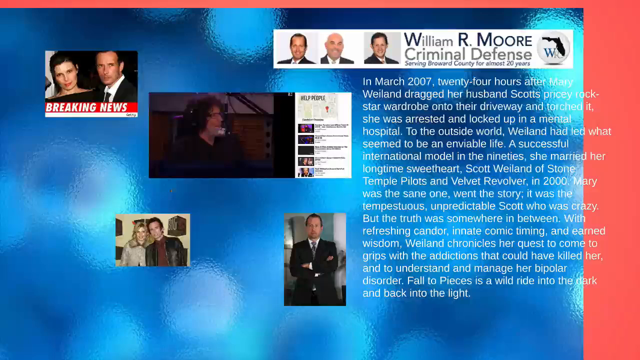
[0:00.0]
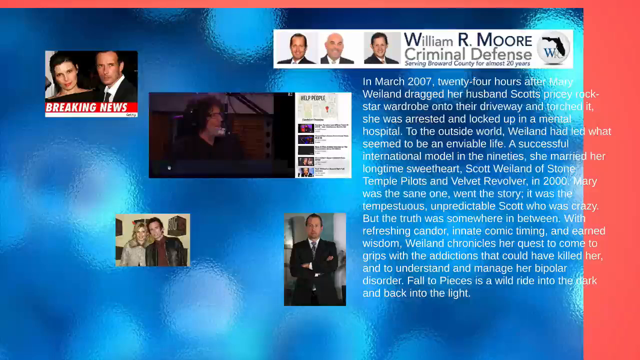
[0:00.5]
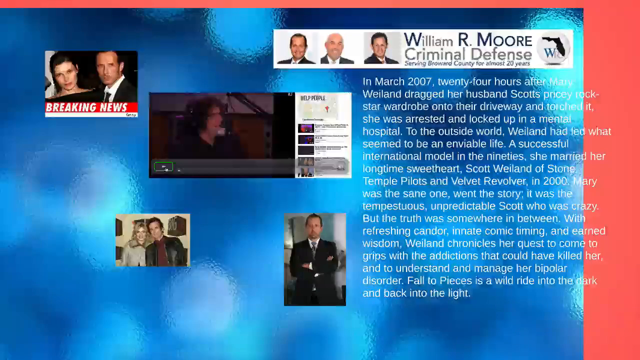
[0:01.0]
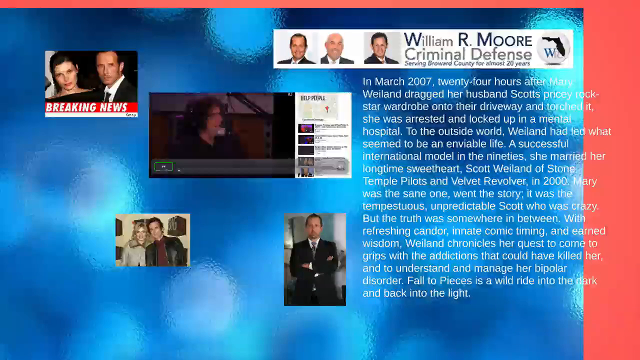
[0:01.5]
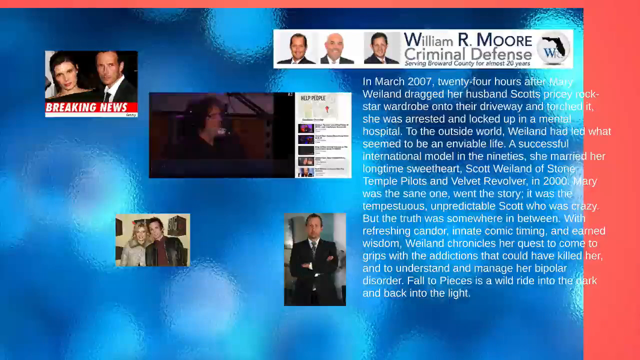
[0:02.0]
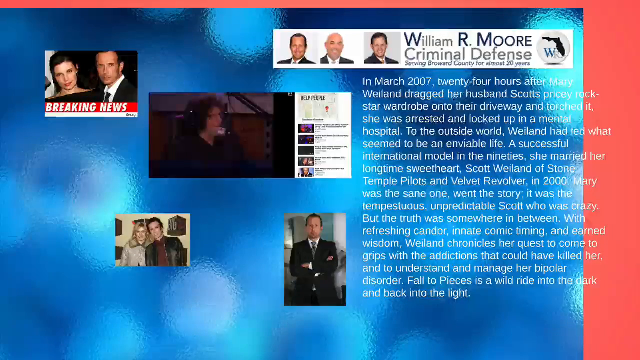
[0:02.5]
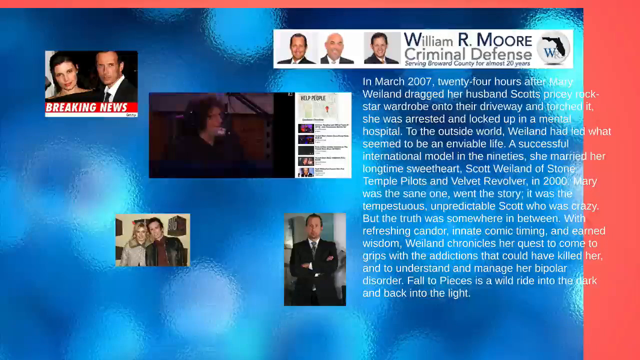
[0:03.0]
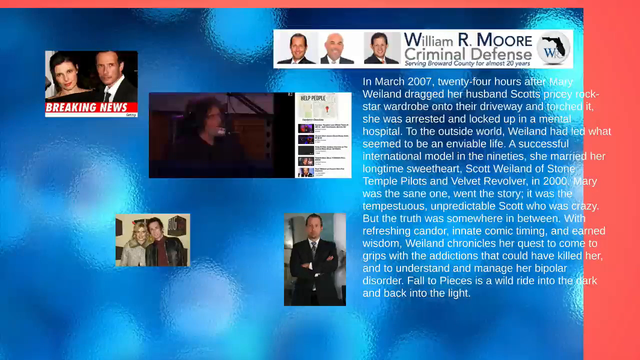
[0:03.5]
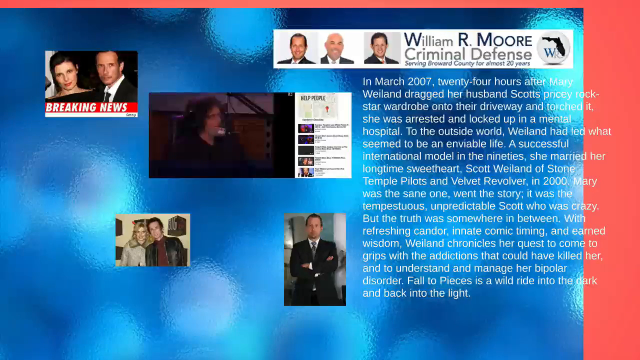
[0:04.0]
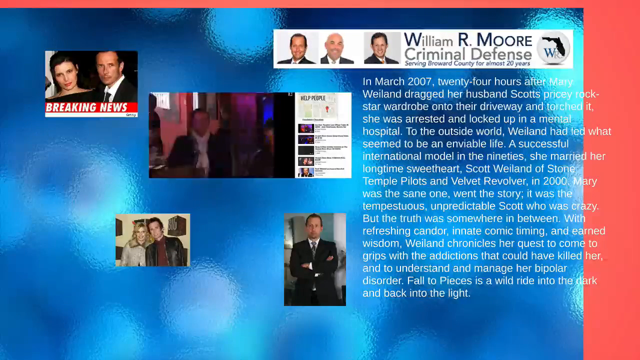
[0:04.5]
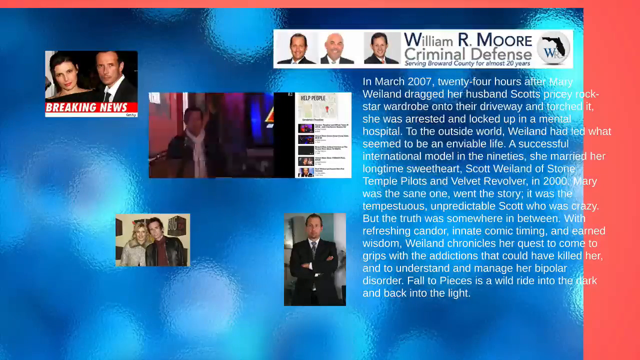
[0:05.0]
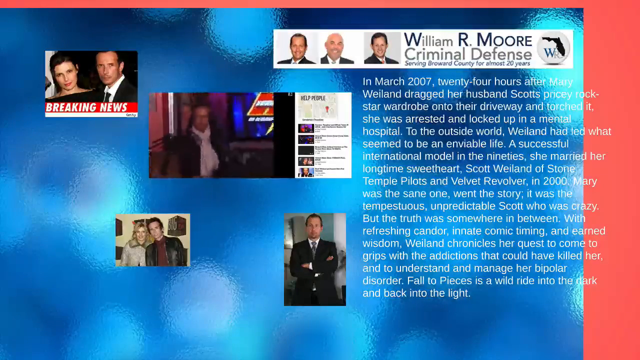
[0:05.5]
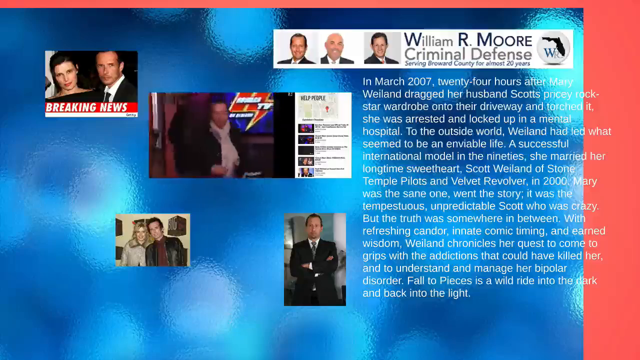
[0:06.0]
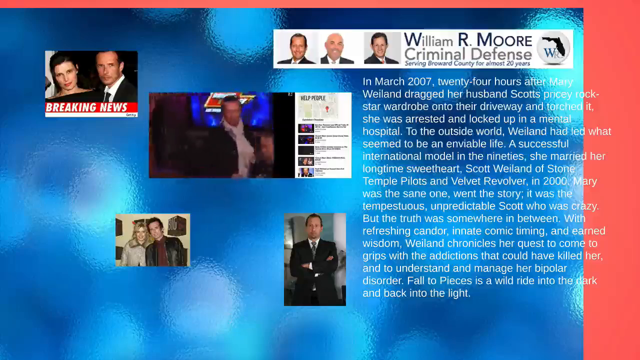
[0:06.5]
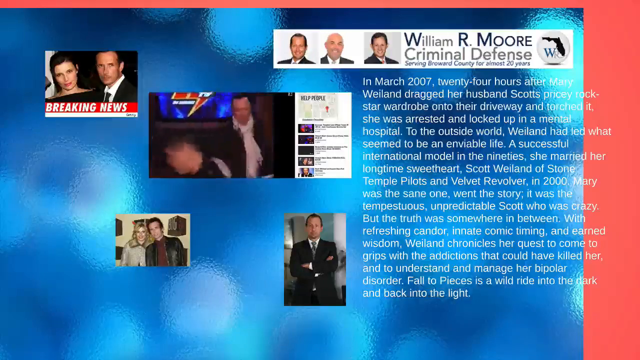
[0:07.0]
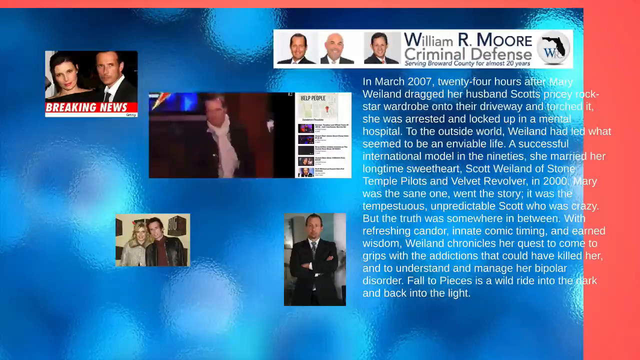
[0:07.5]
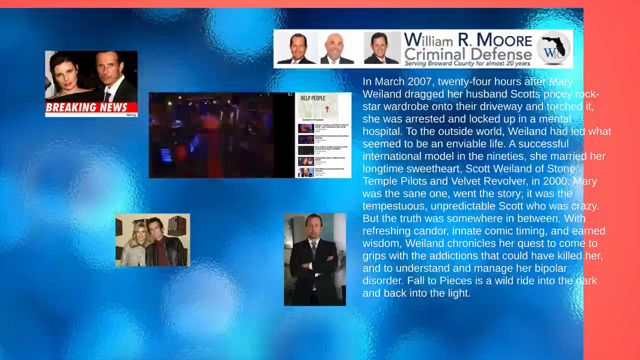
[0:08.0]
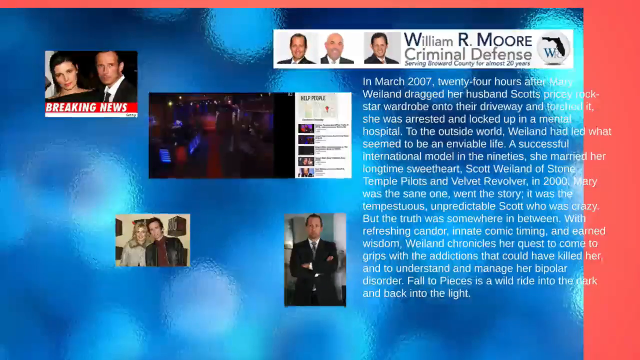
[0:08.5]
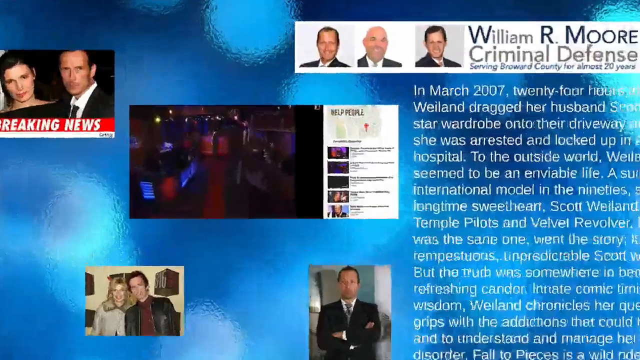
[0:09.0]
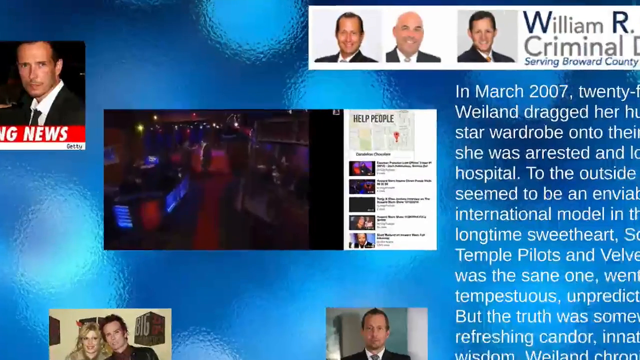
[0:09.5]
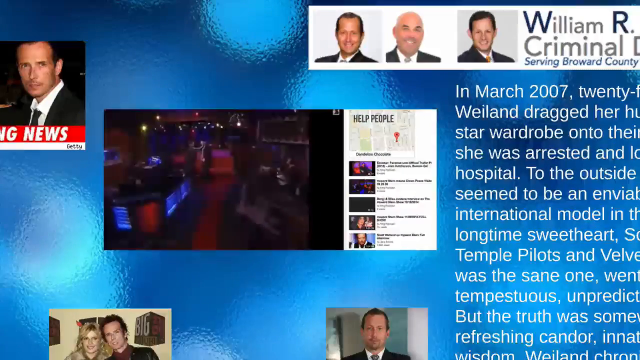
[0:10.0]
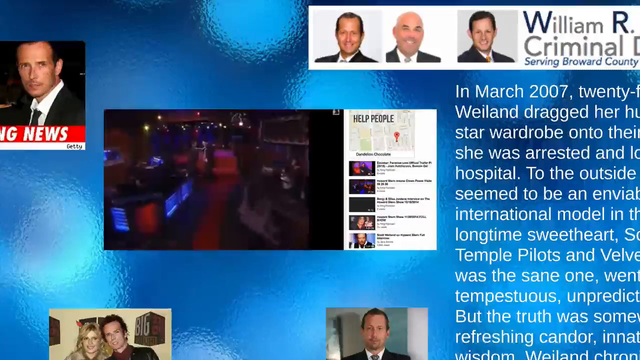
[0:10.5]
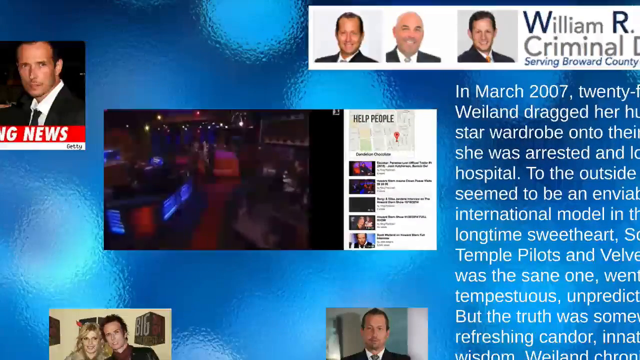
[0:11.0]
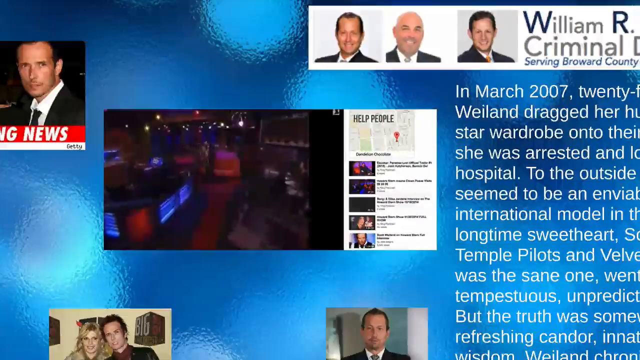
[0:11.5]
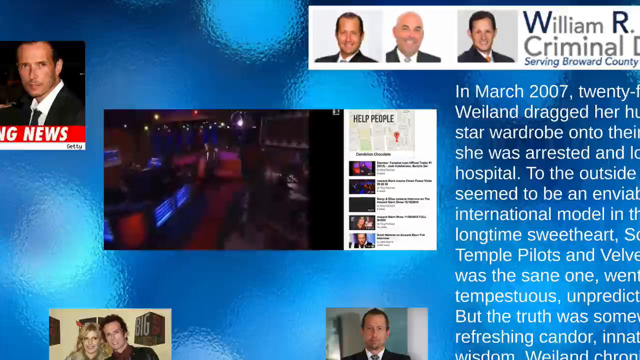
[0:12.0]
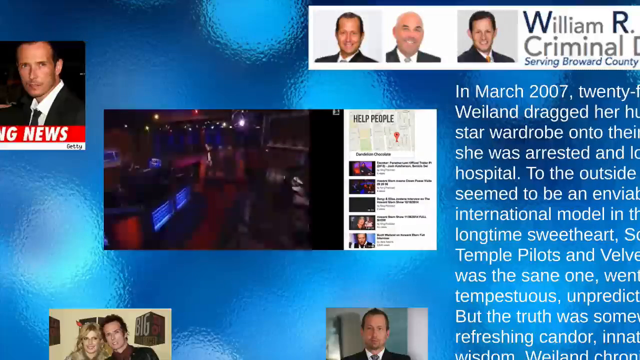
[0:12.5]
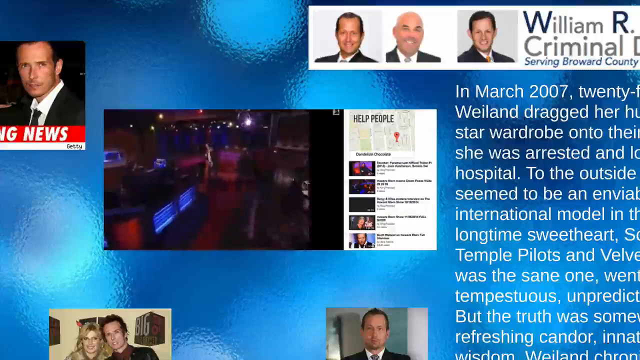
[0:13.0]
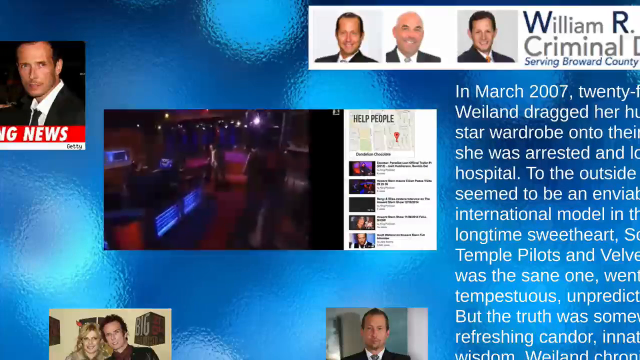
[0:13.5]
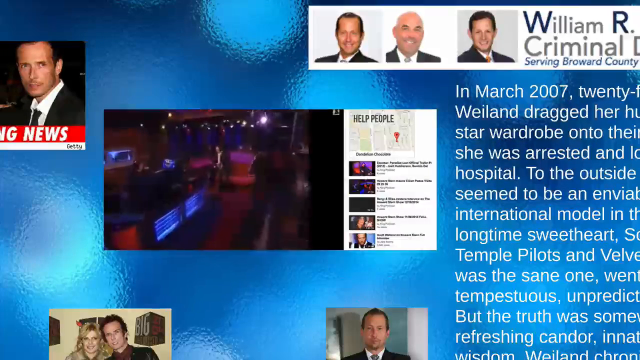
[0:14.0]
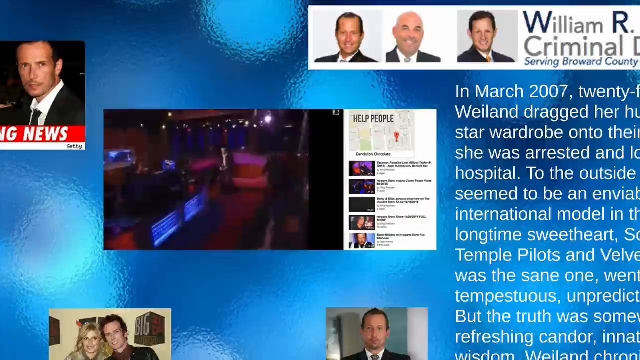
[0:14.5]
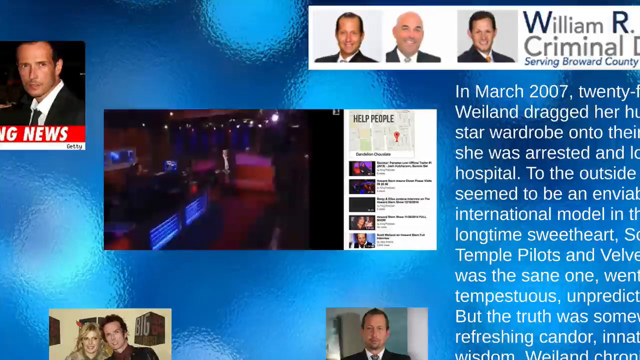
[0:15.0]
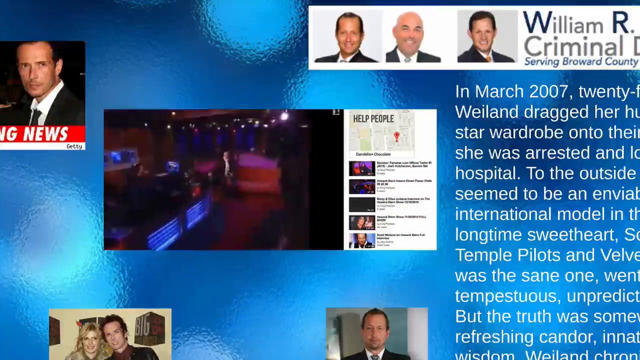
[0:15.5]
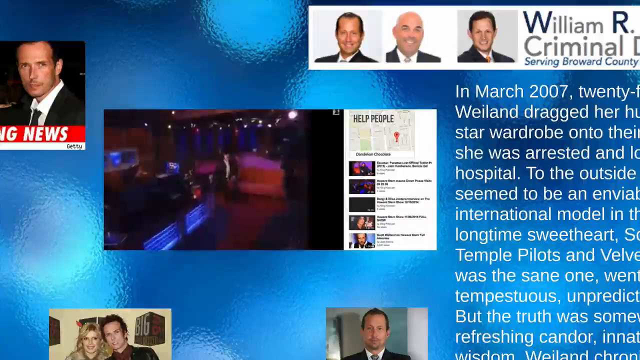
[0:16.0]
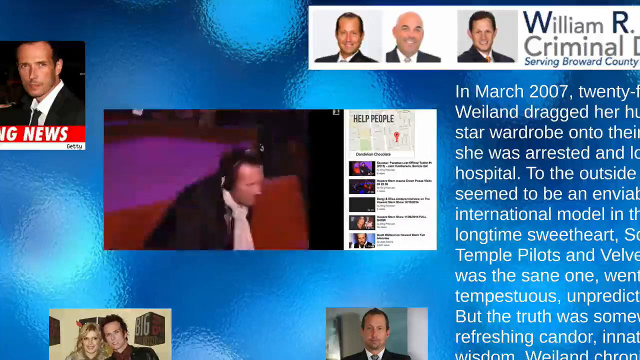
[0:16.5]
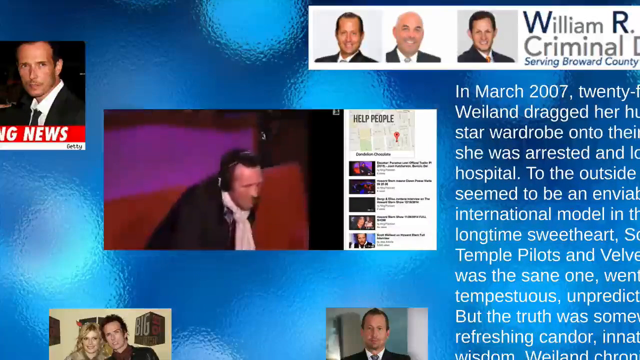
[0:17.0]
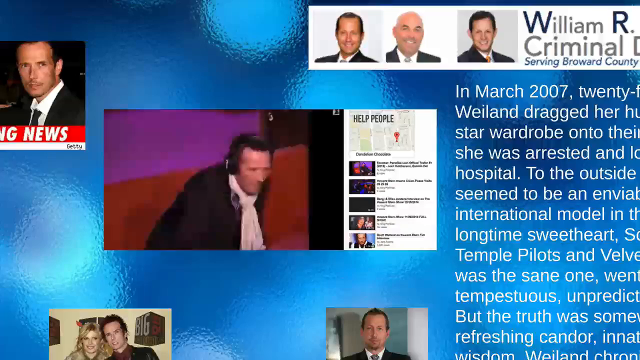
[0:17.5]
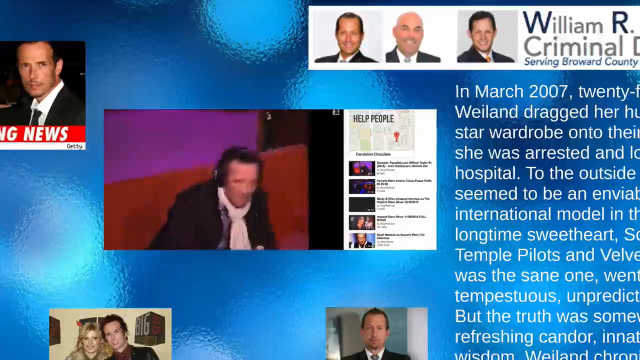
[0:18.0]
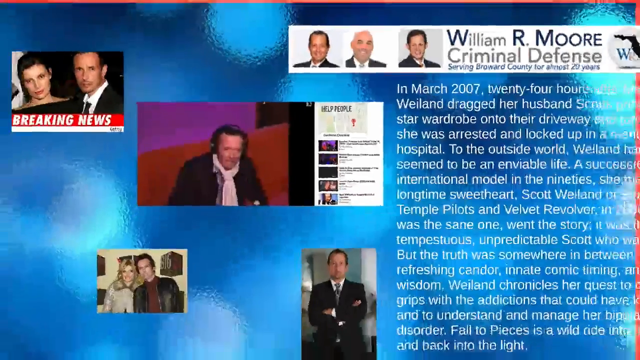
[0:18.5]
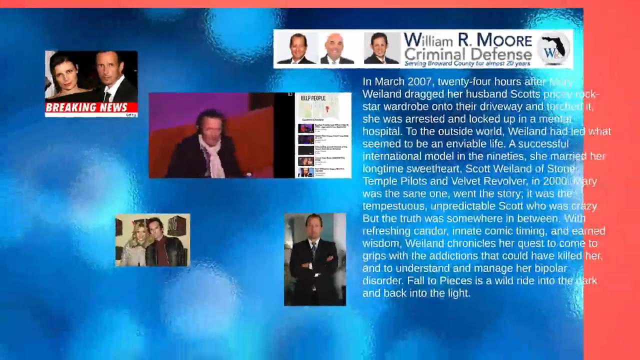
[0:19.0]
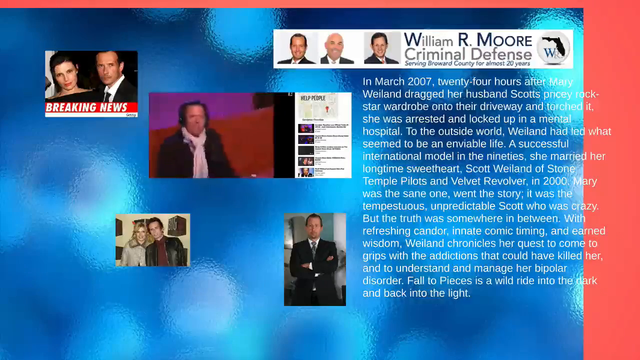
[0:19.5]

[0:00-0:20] Two people, a male and a female, appear along with text naming William Almore, a criminal defense lawyer. On-screen text then reads, beginning "In March 2007, 24 hours after", and continues with lines including "She was arrested and locked up in a mental hospital," "a successful international model in the 90s," and "understand and manage her bipolar disorder."